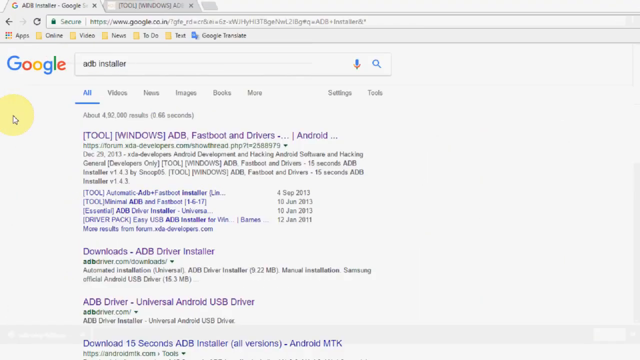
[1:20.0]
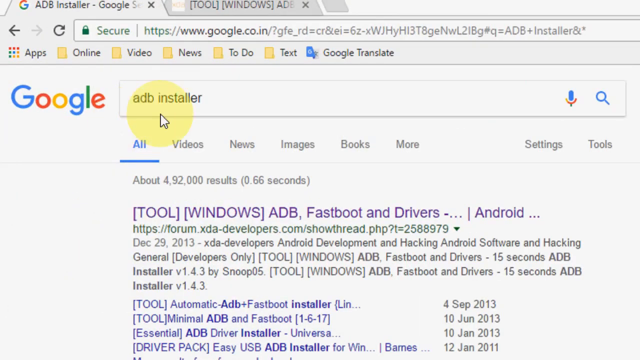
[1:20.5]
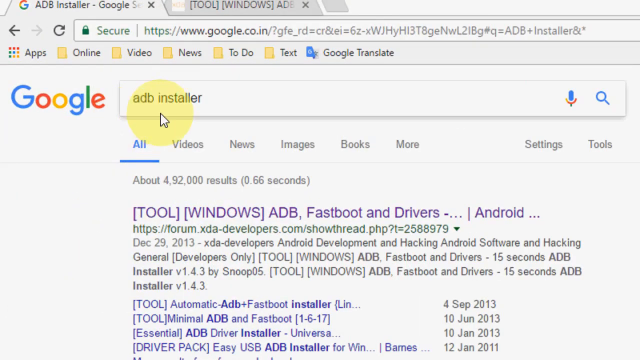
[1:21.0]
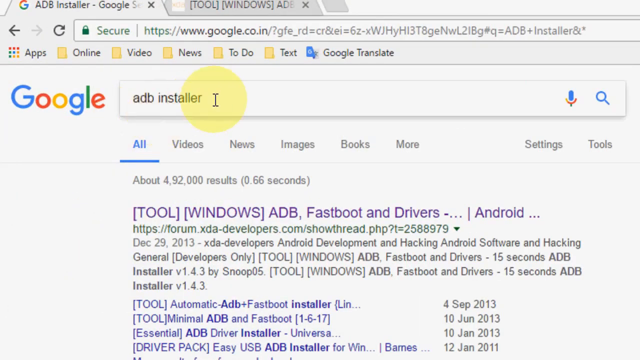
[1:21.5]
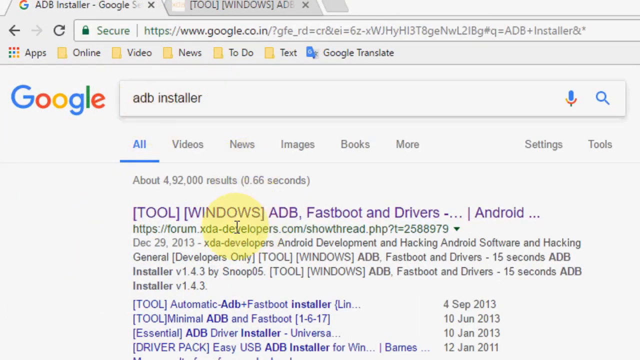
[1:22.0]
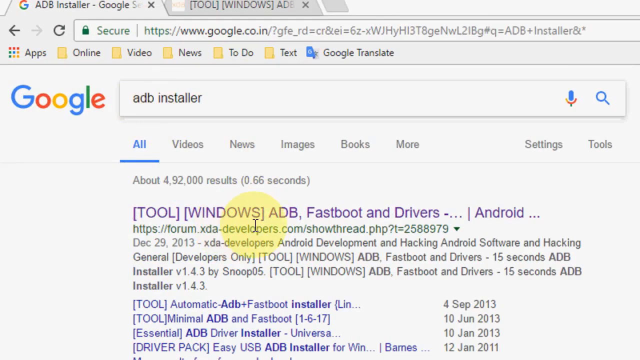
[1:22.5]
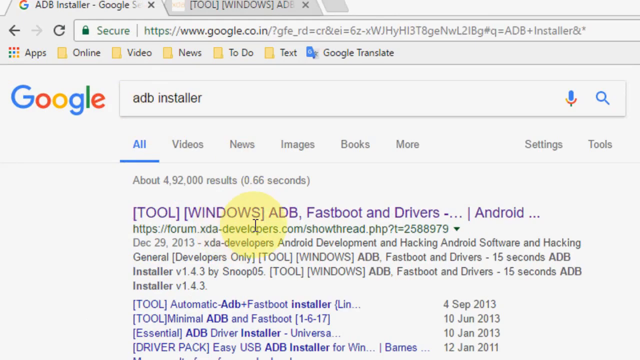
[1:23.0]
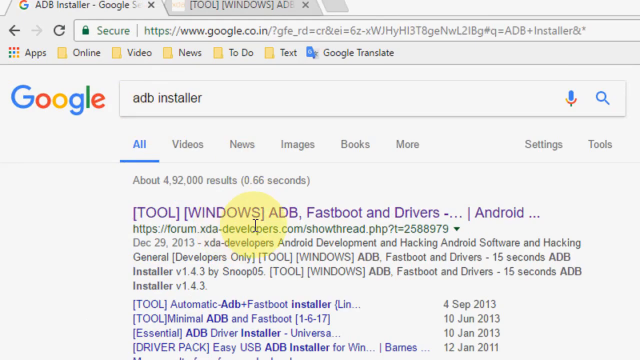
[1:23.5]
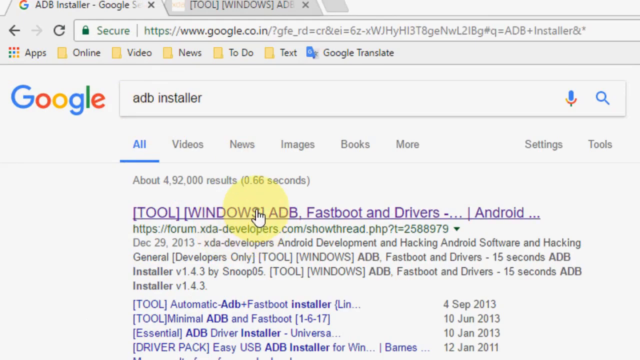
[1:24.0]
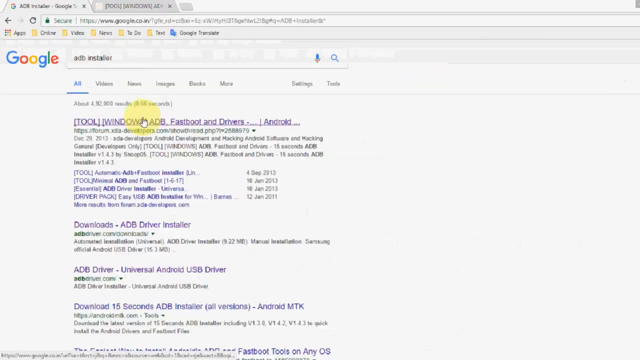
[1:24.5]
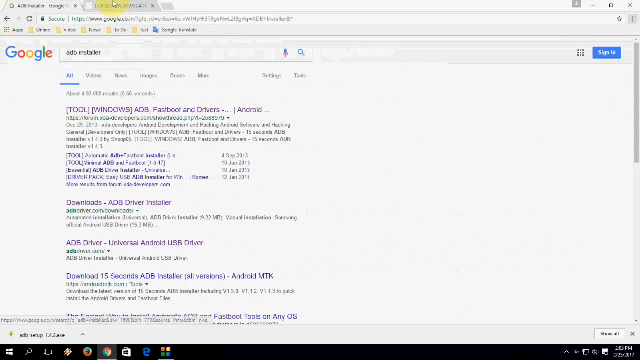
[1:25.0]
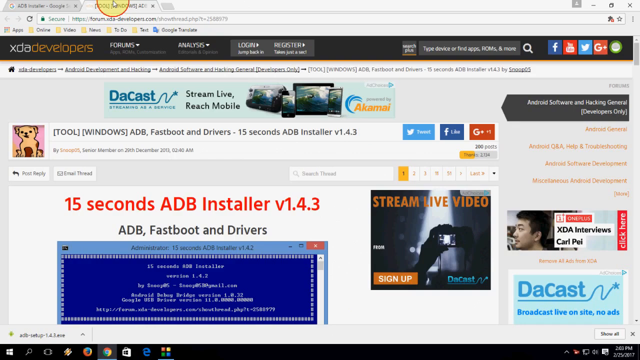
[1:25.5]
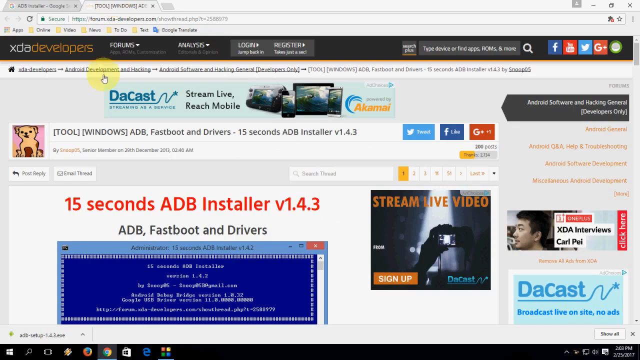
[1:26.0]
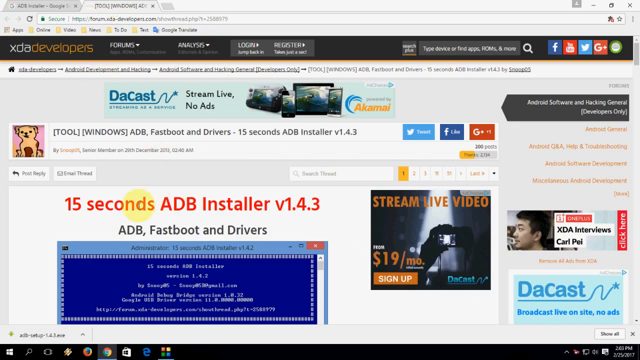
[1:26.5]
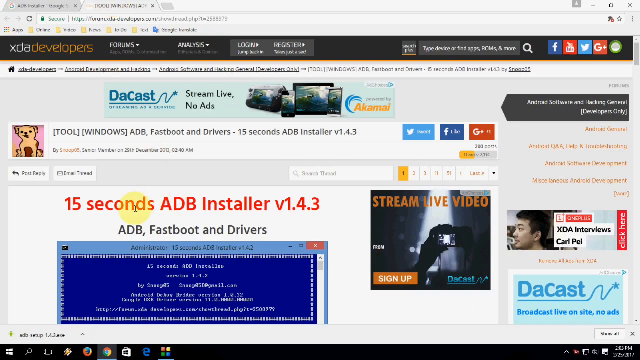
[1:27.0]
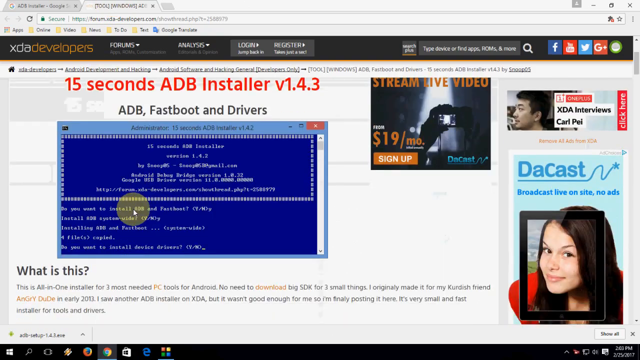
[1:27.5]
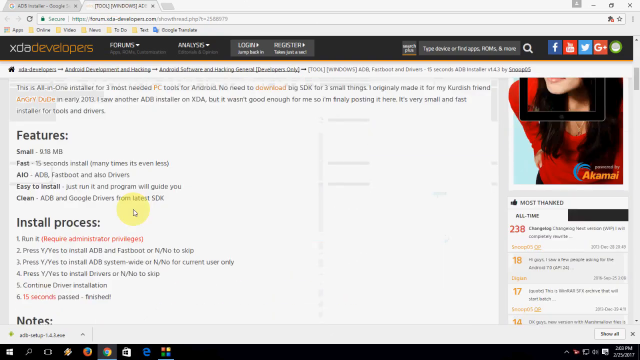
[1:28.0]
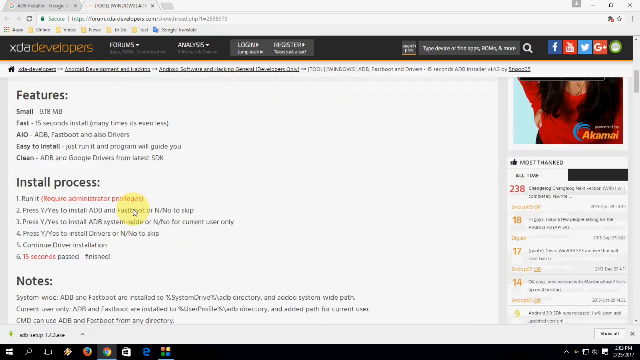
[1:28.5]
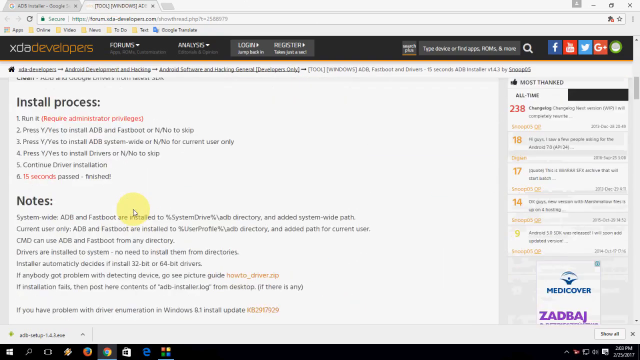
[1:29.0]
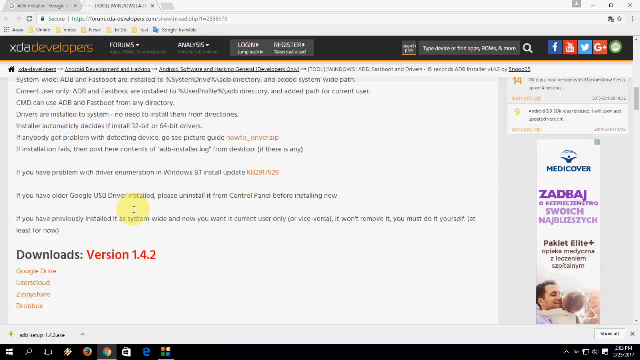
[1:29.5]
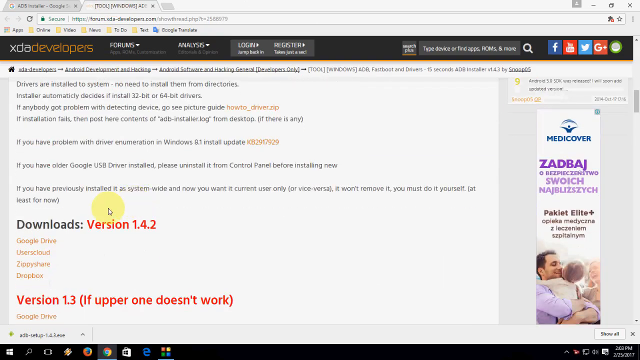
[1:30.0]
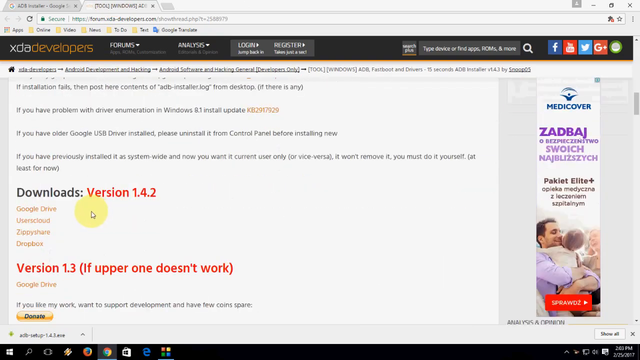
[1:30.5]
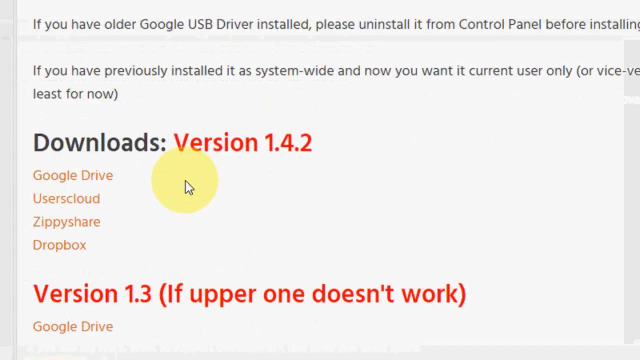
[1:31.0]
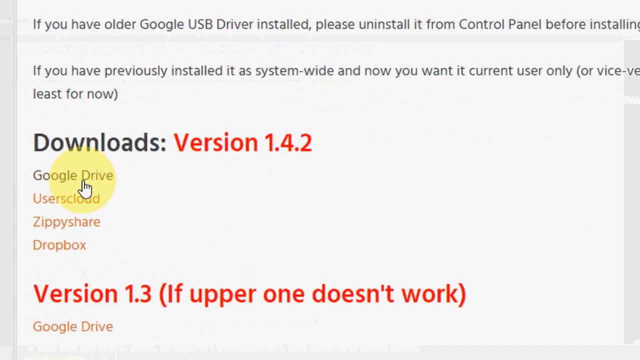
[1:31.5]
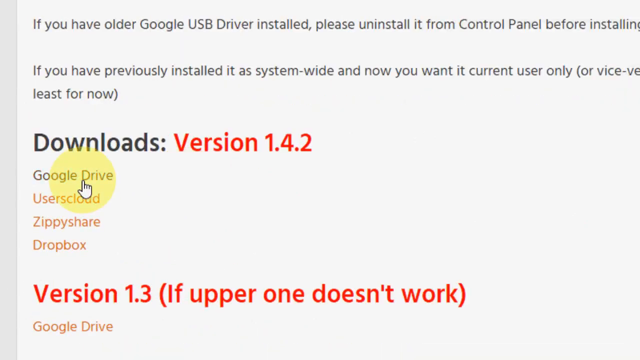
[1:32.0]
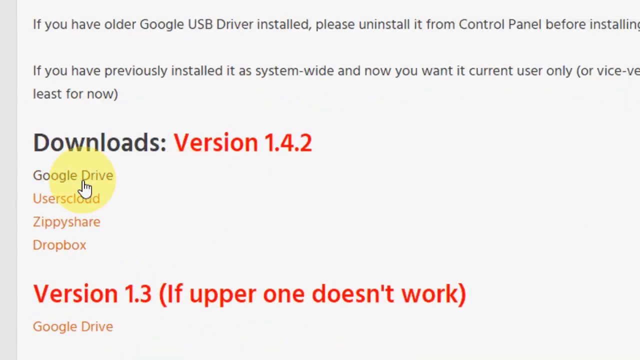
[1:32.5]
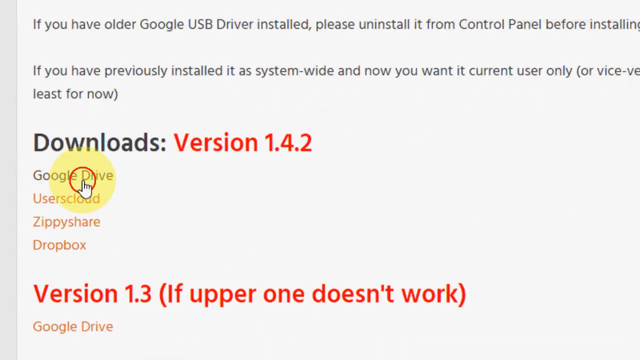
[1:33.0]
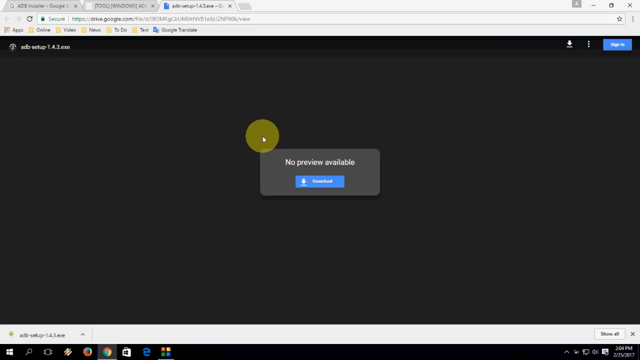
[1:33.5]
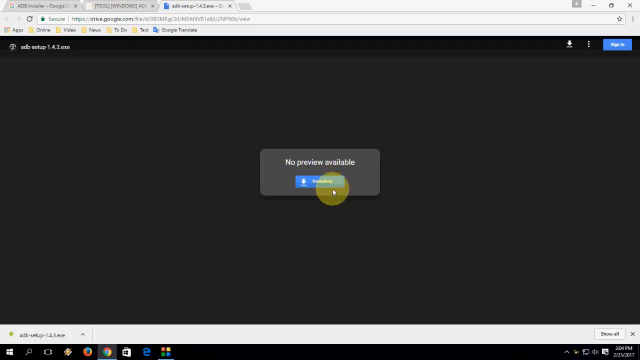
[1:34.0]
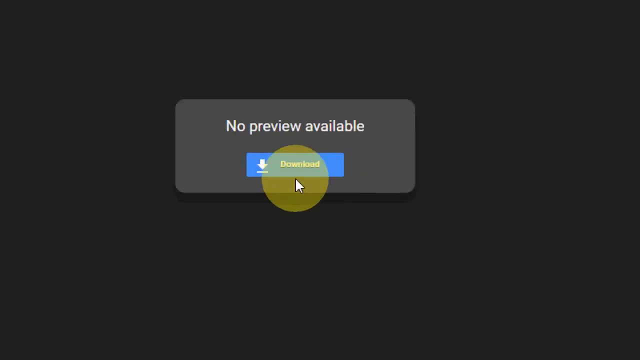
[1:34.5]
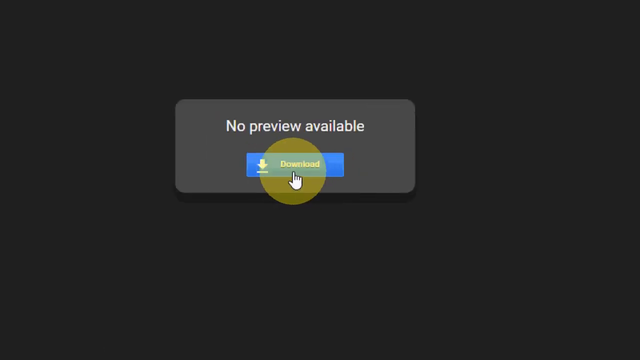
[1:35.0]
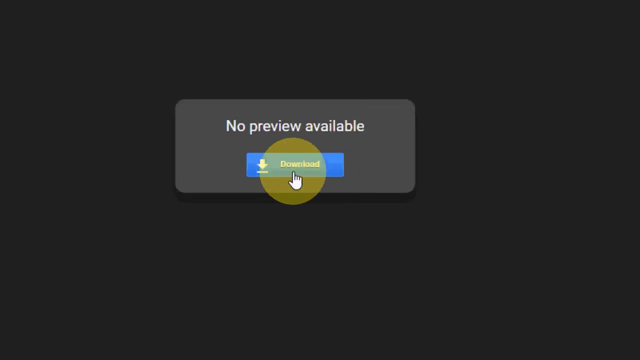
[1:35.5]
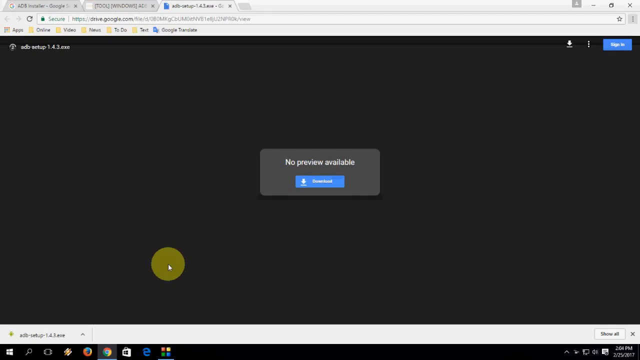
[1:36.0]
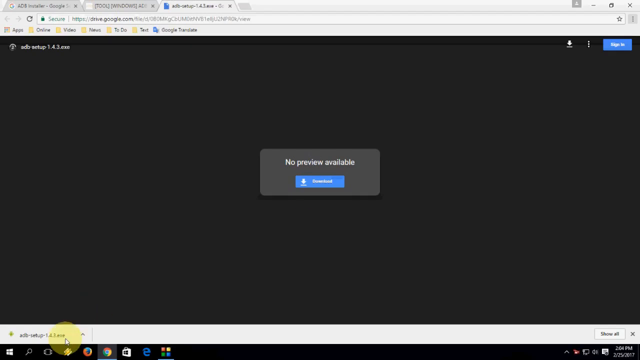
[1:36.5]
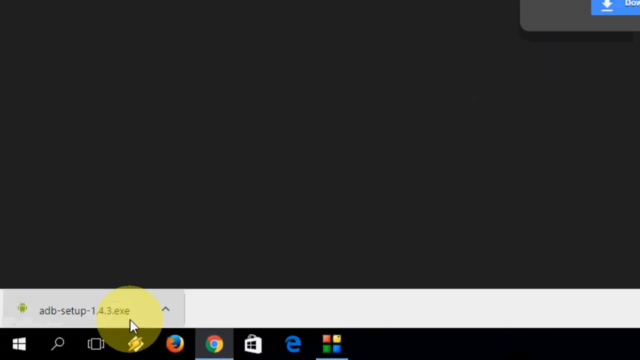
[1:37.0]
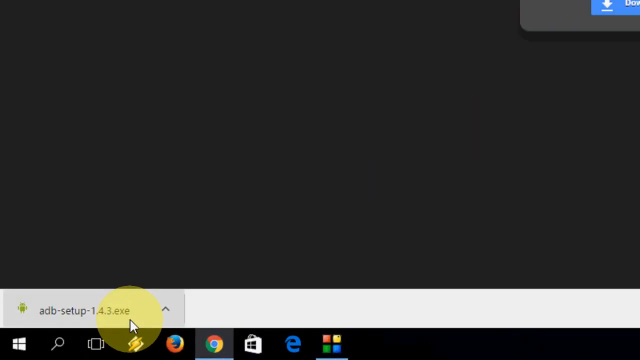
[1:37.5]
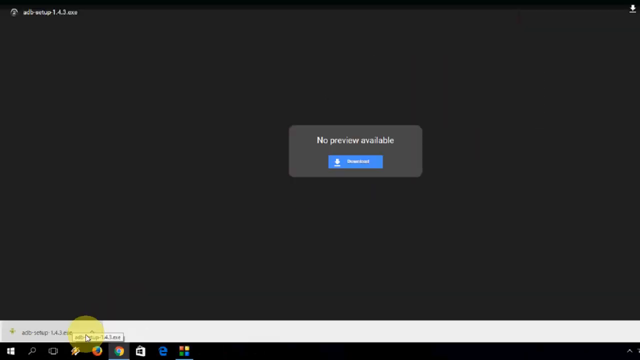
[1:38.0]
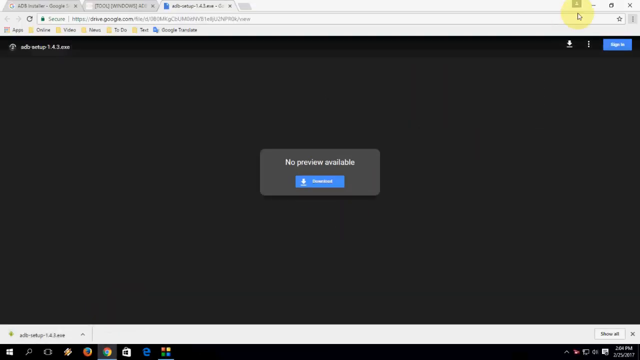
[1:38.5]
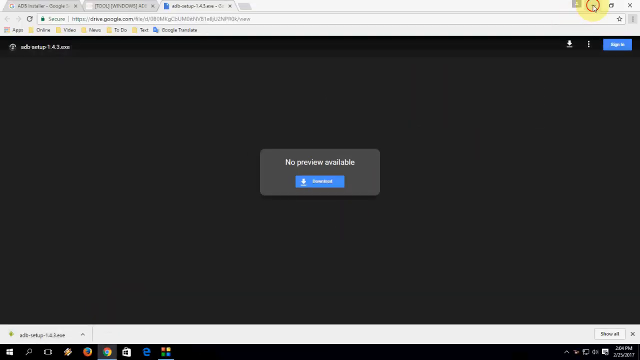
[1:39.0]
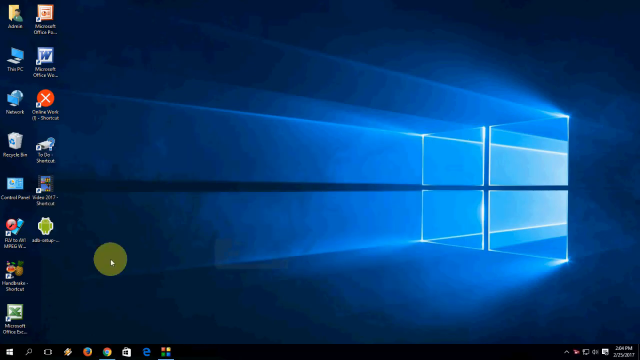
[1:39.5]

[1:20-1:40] On a Google search page with a search field at the top, the user has entered "ADB installer". A list of links appears, and the user focuses on the first one at the top, which mentions ADB, Fastboot and drivers. The user clicks that first link and reaches a page with the 15-second ADB installer. They scroll down the page, where it shows Google Drive as compatible with the software, then move back up to the top and click on the main window to download it. A small window pops up on a black screen with the statement "no preview available" and, below it, a large blue button that says "download". The user clicks the button and the 15-second ADB installer begins to download.